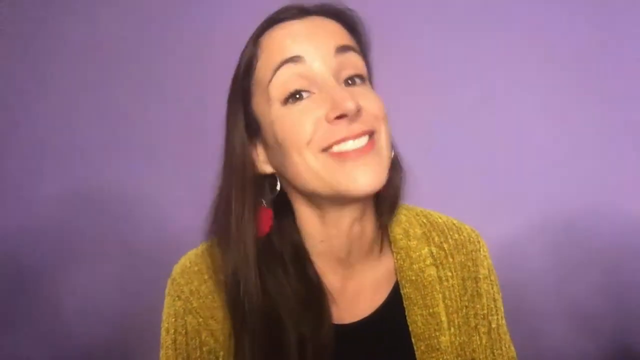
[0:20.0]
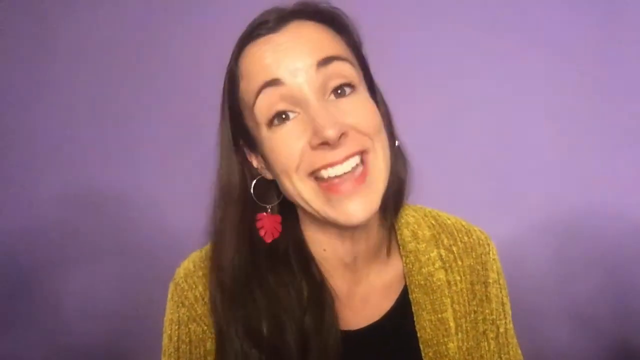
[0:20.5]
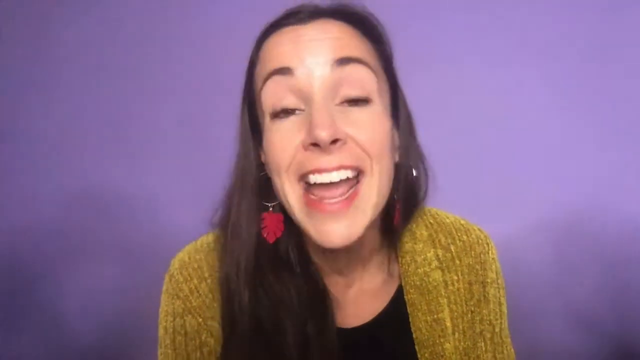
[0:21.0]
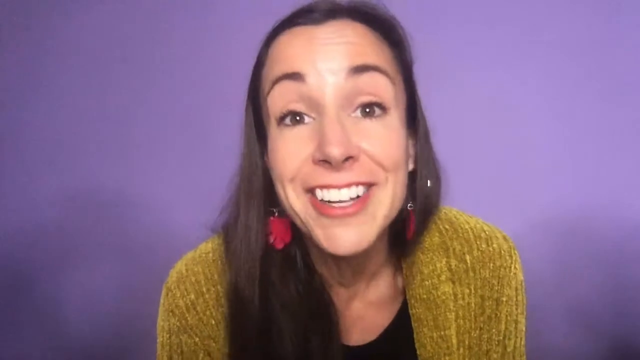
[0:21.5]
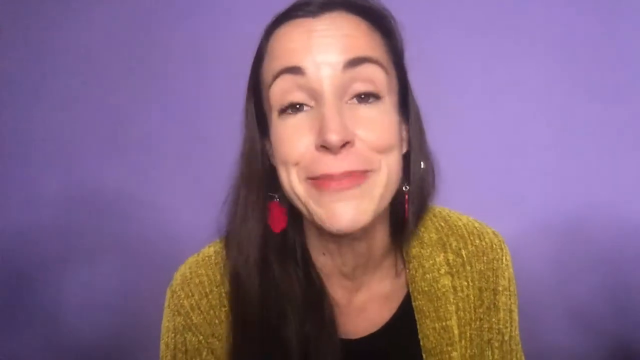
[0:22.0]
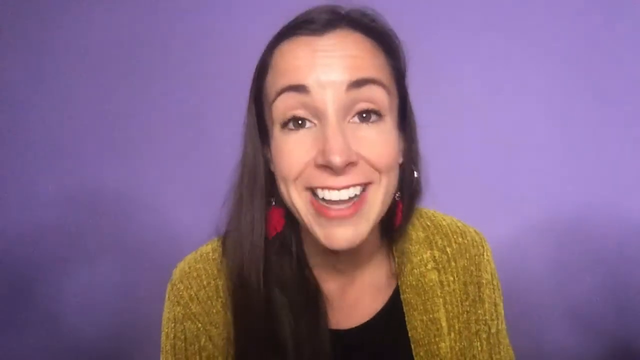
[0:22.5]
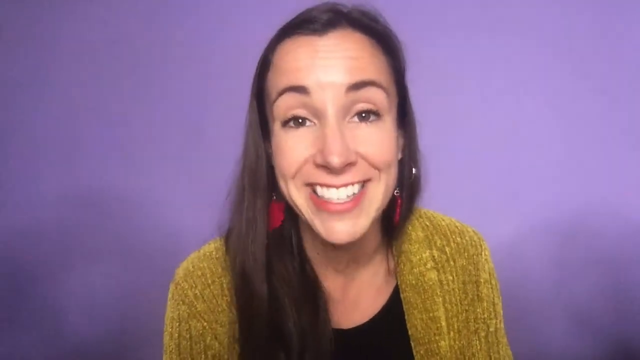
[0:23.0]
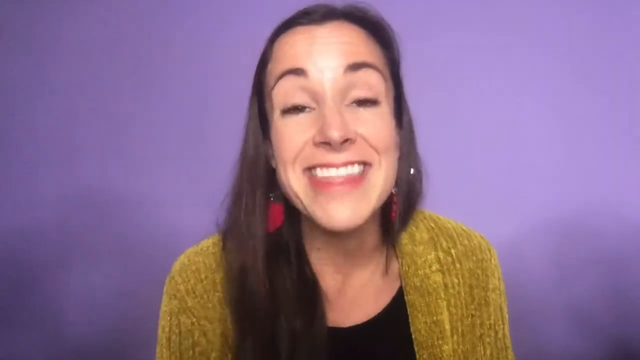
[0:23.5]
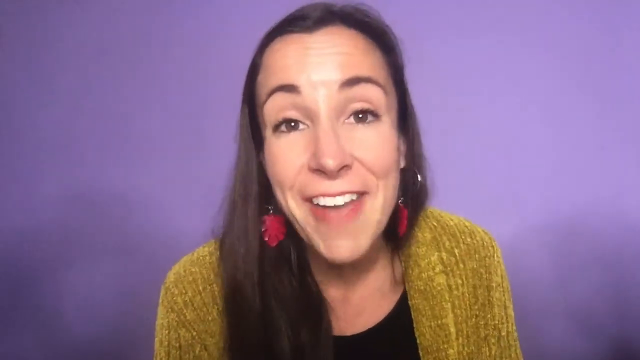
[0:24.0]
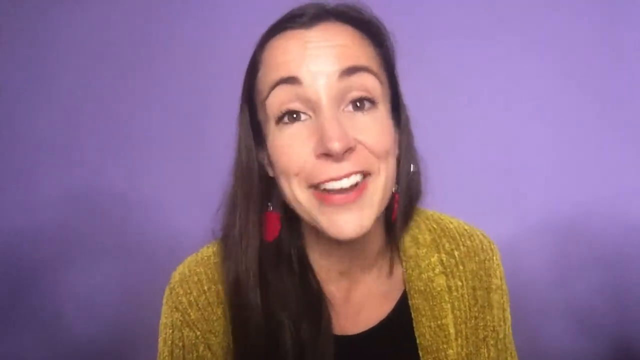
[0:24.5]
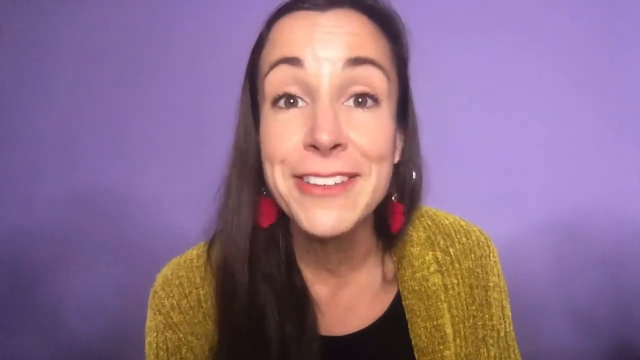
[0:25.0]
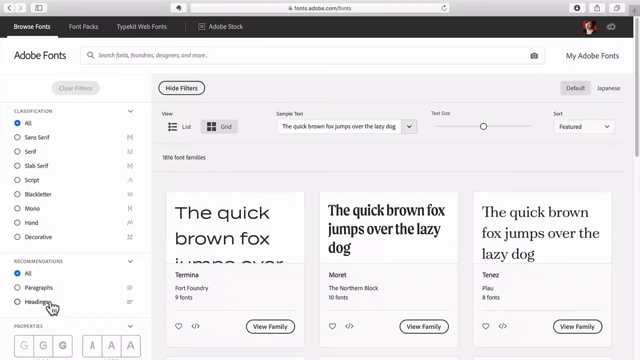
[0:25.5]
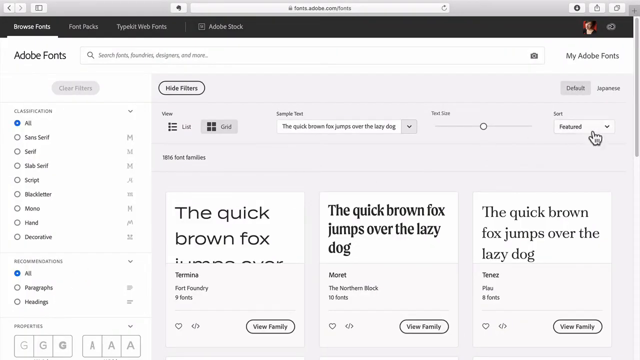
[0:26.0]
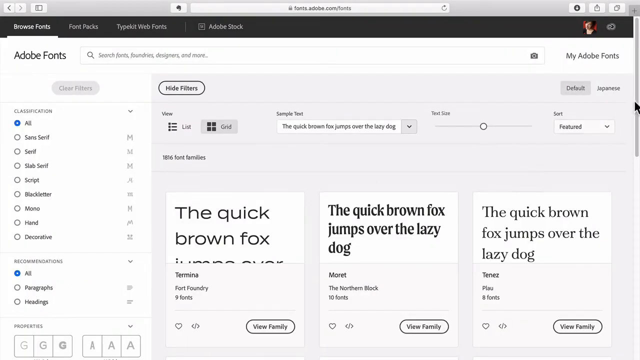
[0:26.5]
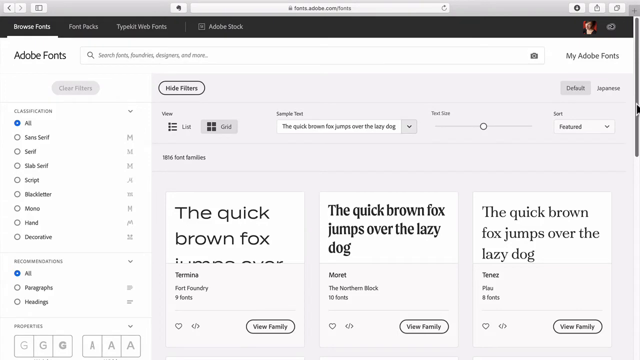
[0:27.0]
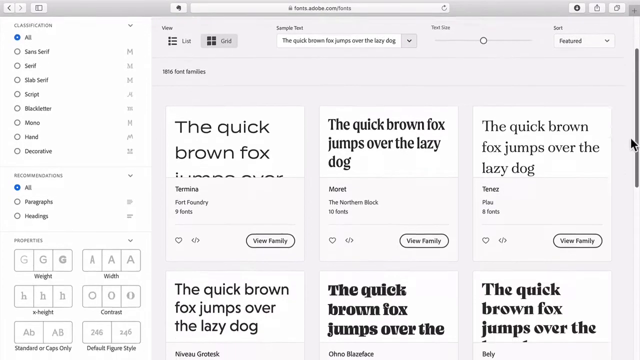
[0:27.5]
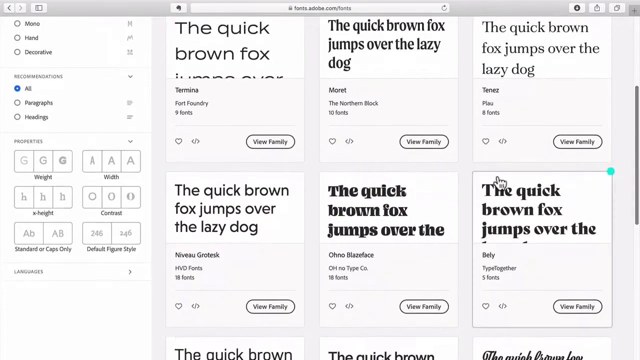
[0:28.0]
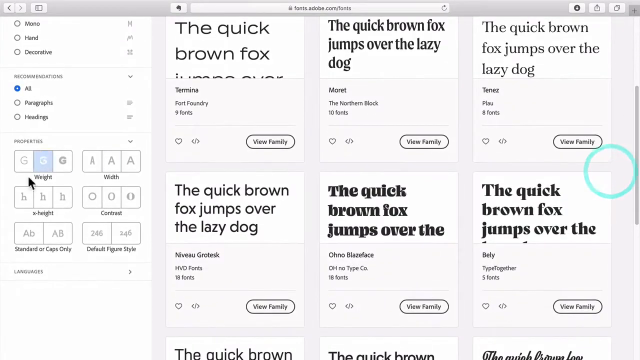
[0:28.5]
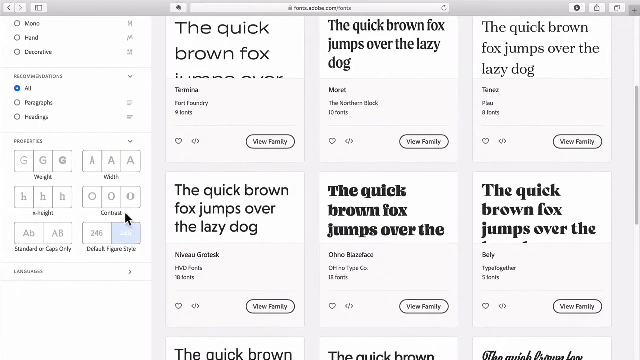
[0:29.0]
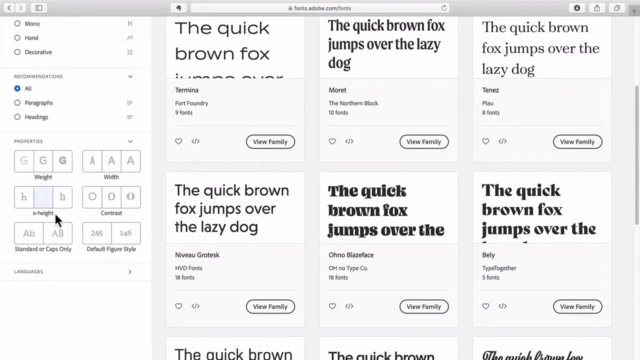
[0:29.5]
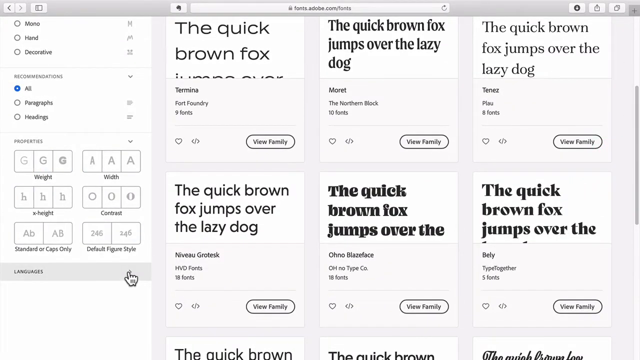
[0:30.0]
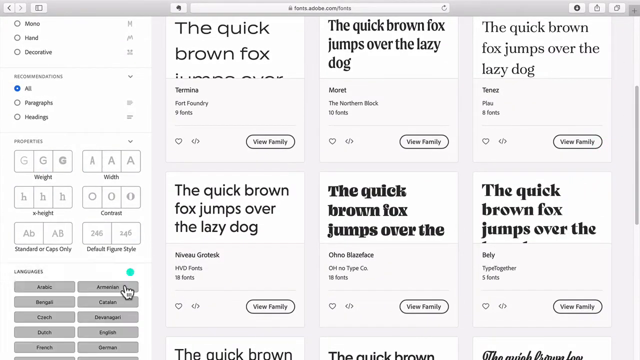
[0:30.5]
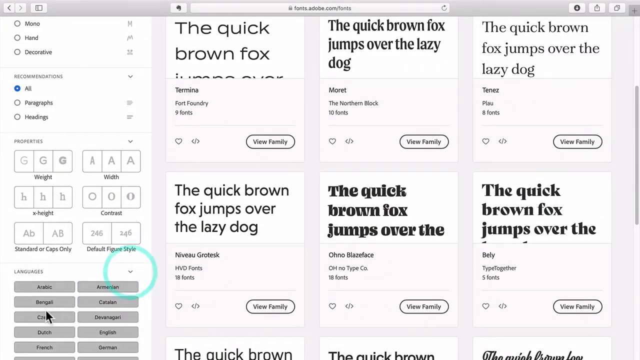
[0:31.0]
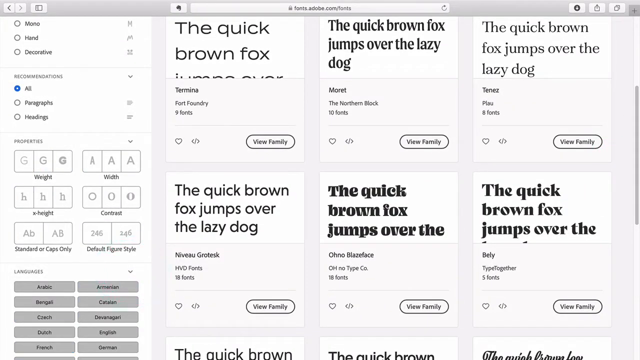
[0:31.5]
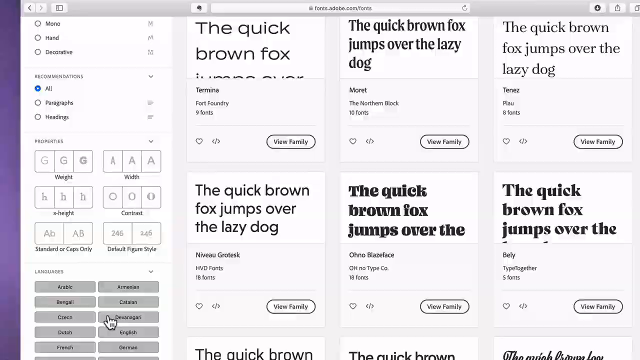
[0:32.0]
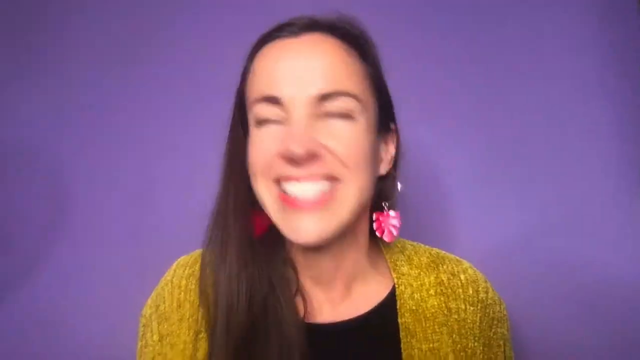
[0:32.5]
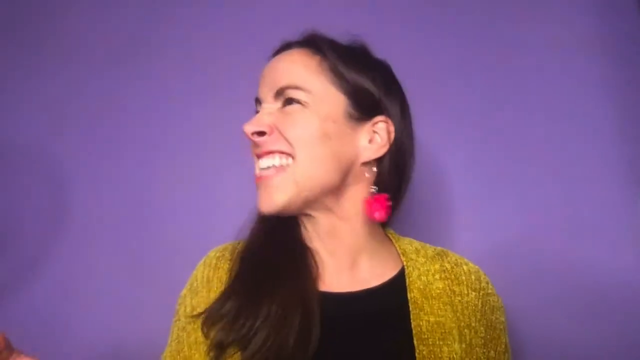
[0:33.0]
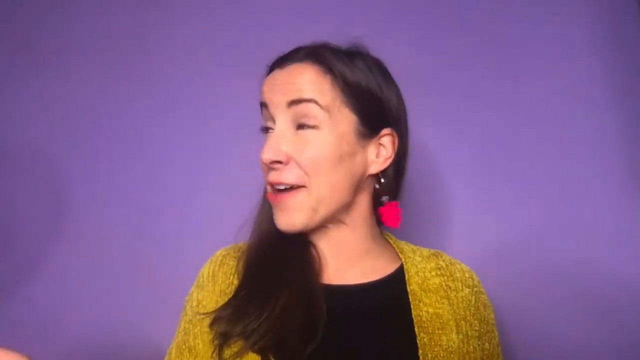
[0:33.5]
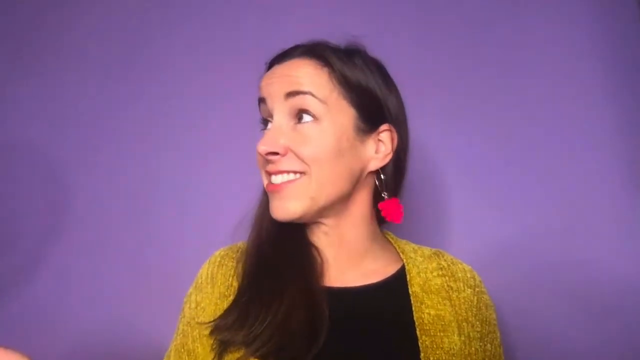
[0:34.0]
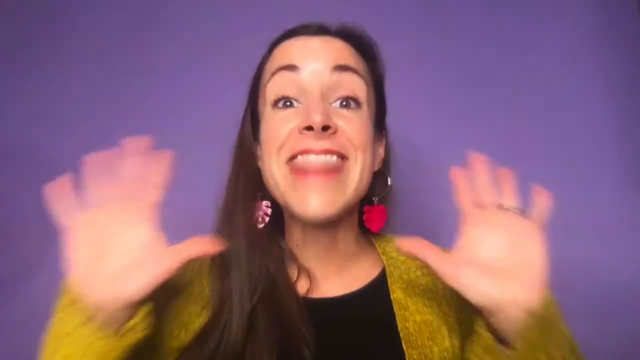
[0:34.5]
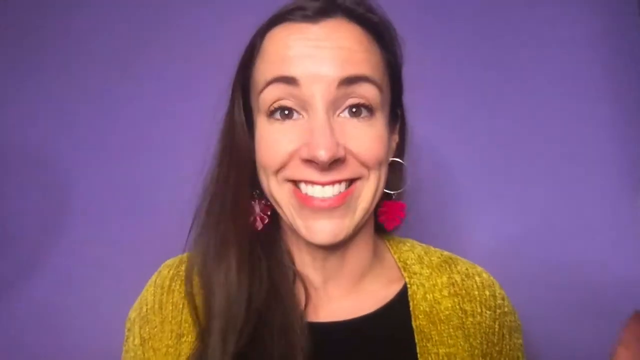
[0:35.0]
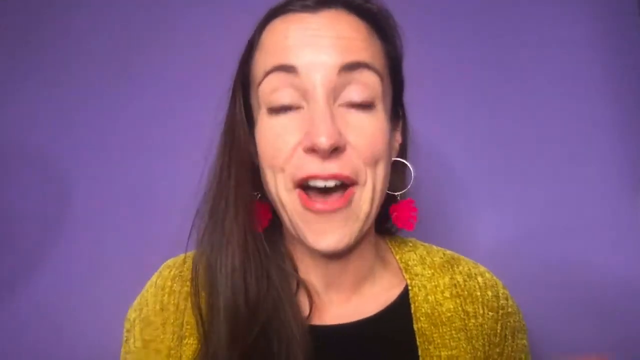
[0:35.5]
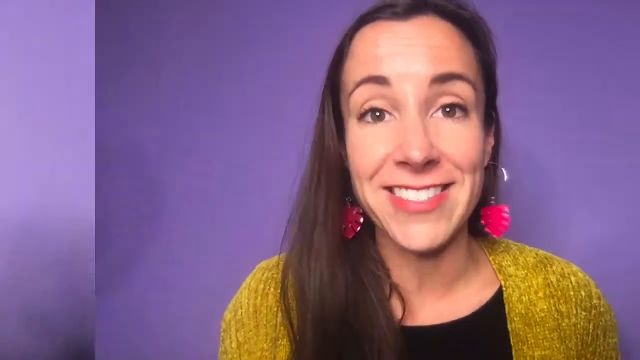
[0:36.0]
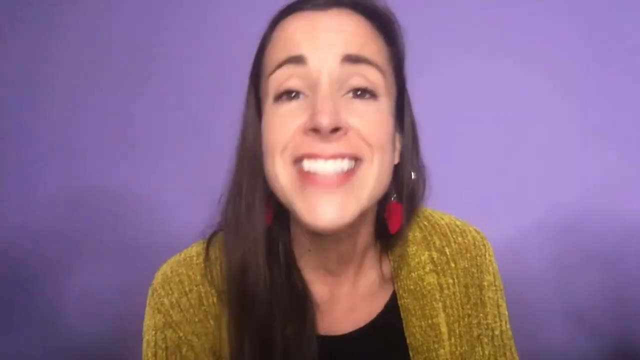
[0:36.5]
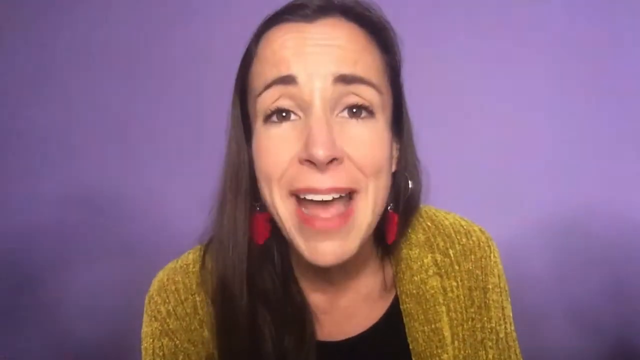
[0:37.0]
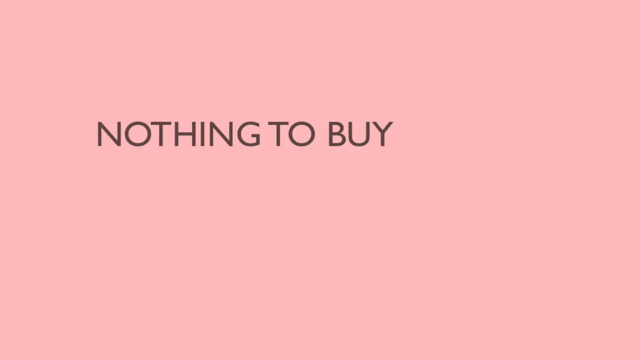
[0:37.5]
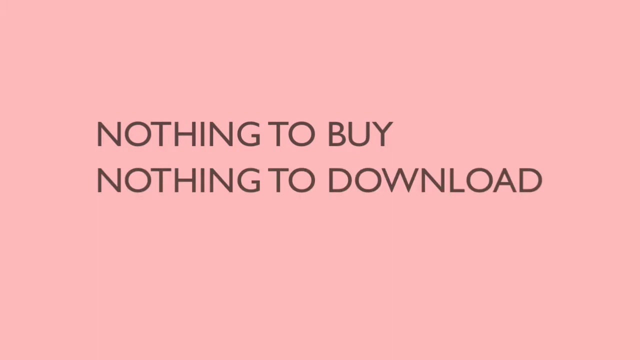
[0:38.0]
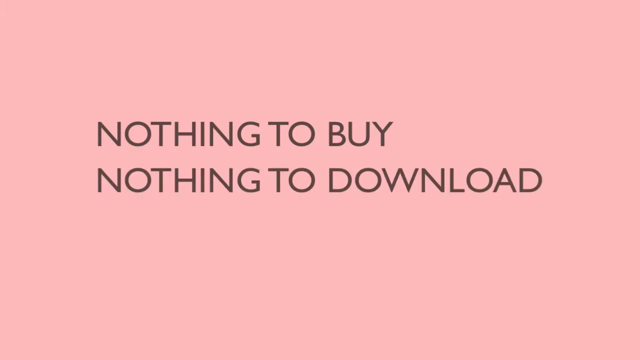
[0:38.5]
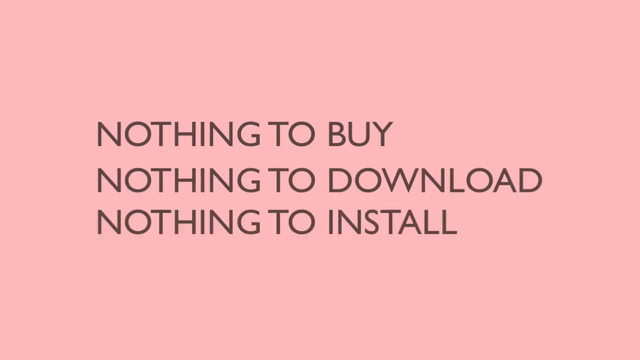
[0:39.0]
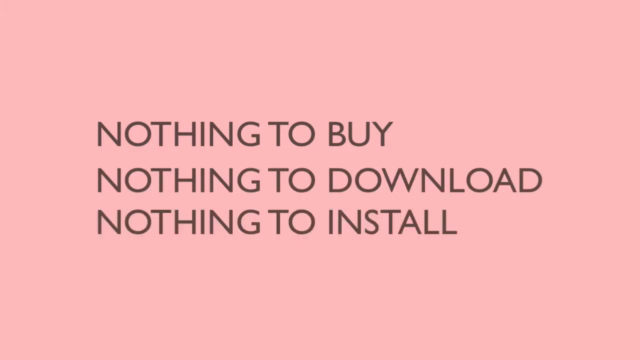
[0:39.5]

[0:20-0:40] A woman in a yellow top and a black dress, wearing red earrings and with long black hair, is in front of a purple wall. She is talking and seems excited. Next, a laptop screen appears showing the sentence "the quick brown fox jumps over the" written in six different forms. Several options are on the left side of the screen, such as mono, serif, head, paragraphs and heading; these look to be different forms that the user is applying to the single text. The cursor shows the user navigating different sections of the screen, moving on the left side, which has options such as width, height and length. There is also an option for contrast.